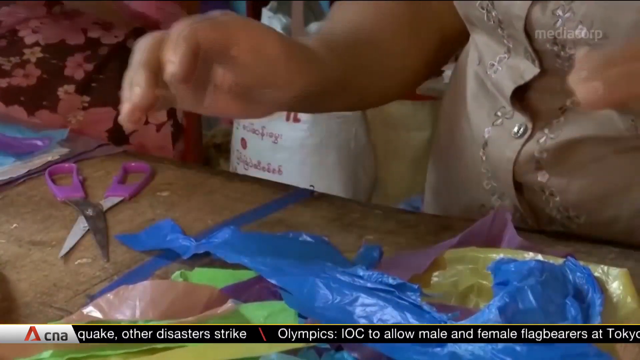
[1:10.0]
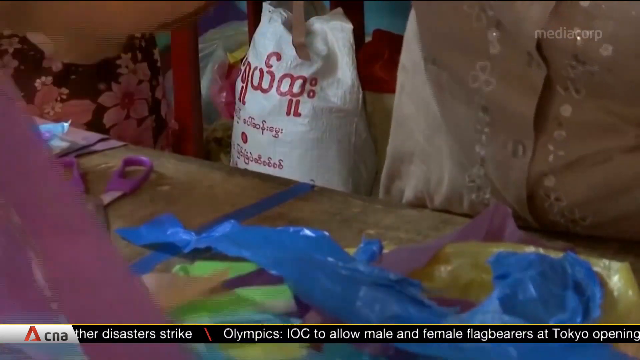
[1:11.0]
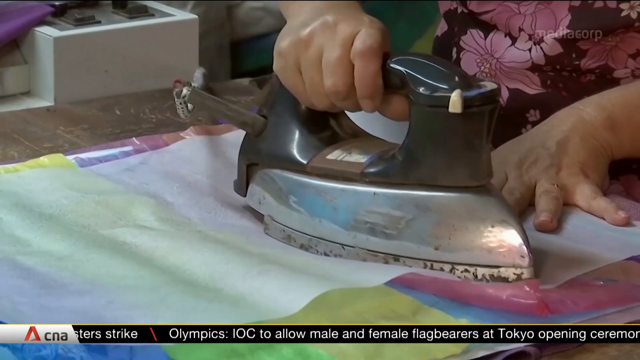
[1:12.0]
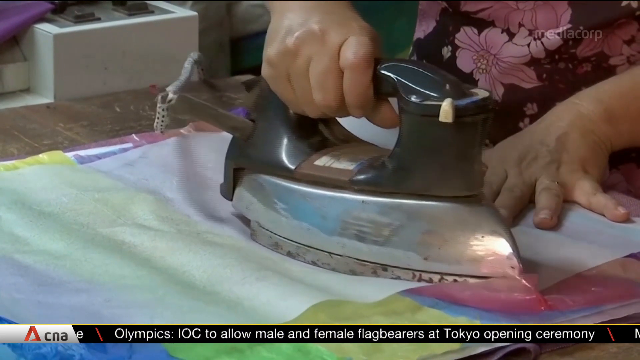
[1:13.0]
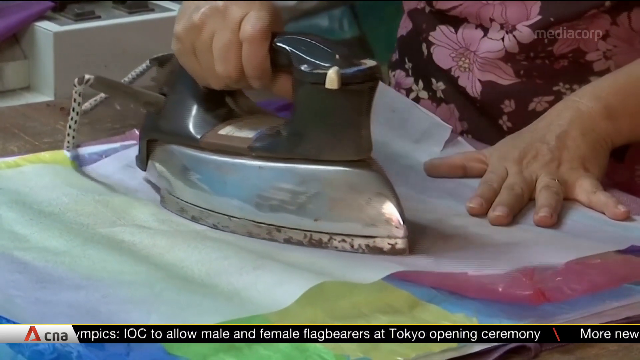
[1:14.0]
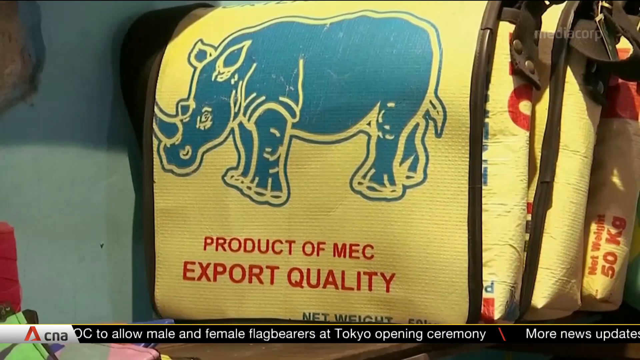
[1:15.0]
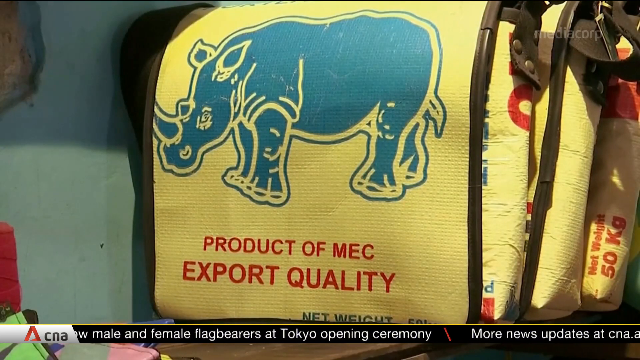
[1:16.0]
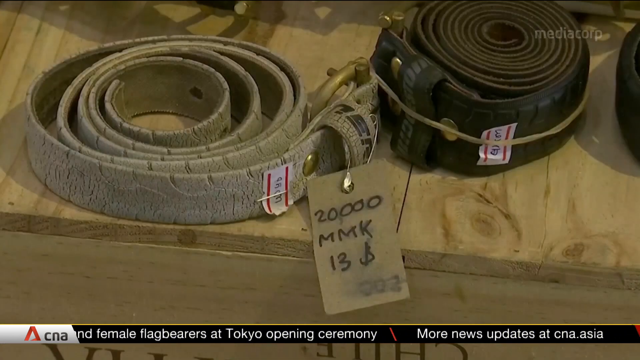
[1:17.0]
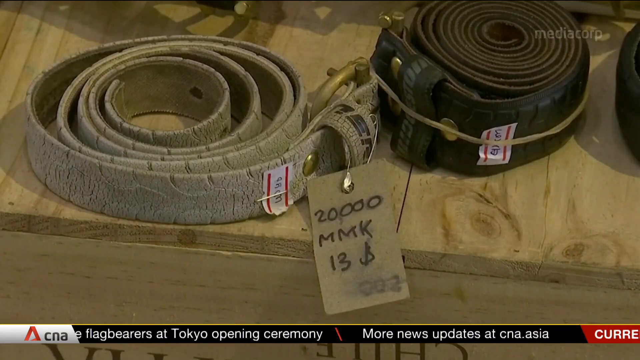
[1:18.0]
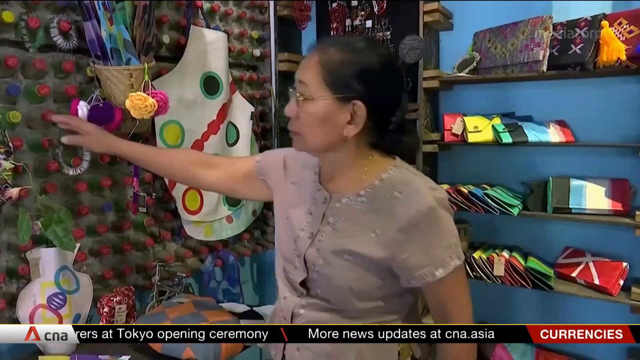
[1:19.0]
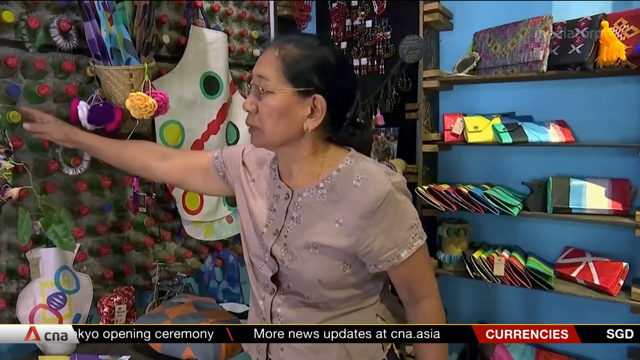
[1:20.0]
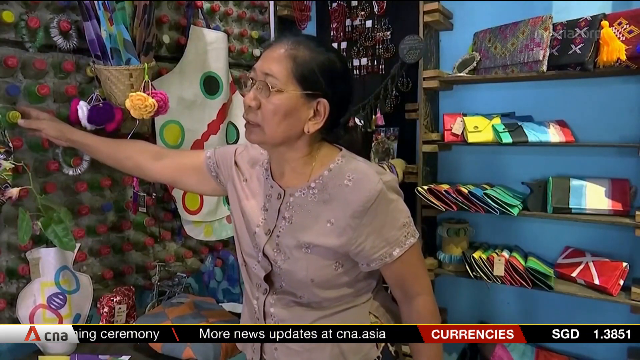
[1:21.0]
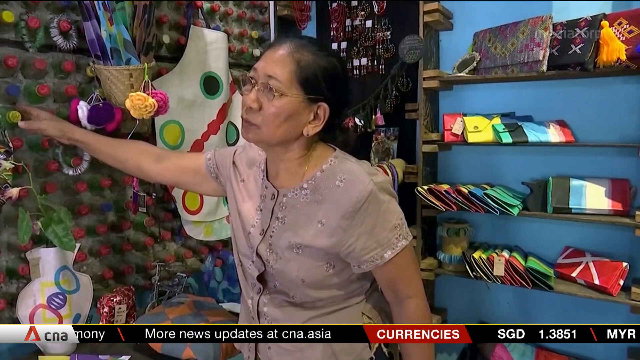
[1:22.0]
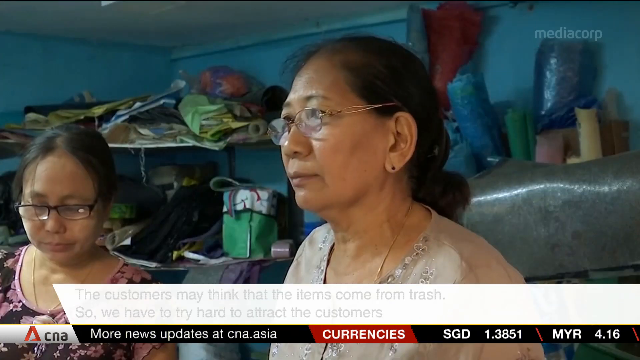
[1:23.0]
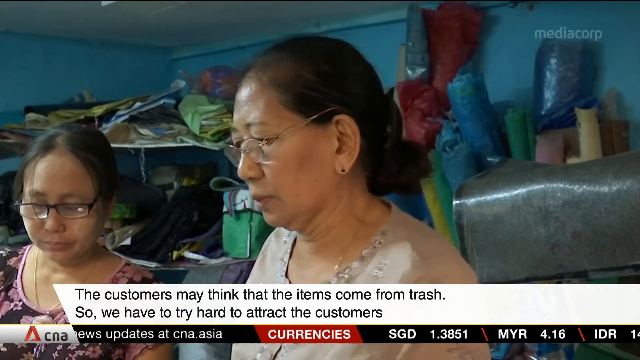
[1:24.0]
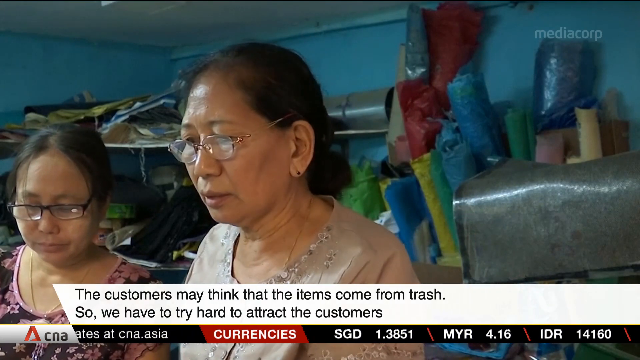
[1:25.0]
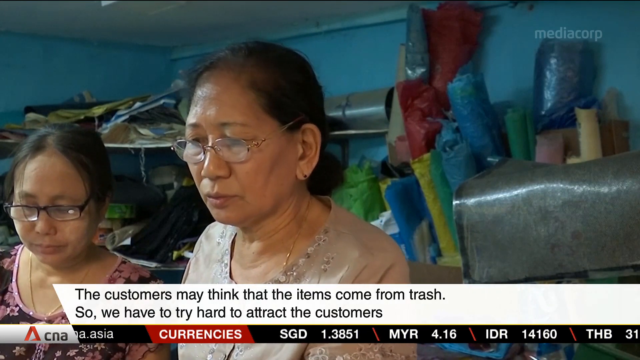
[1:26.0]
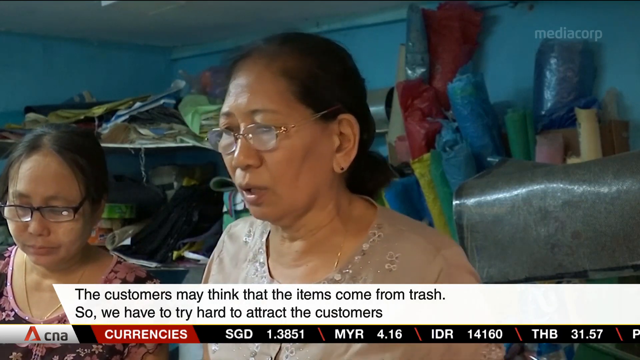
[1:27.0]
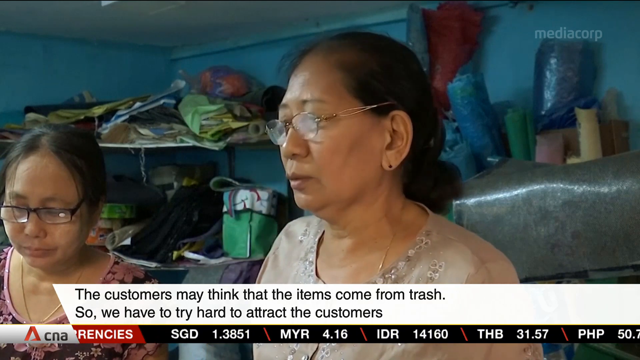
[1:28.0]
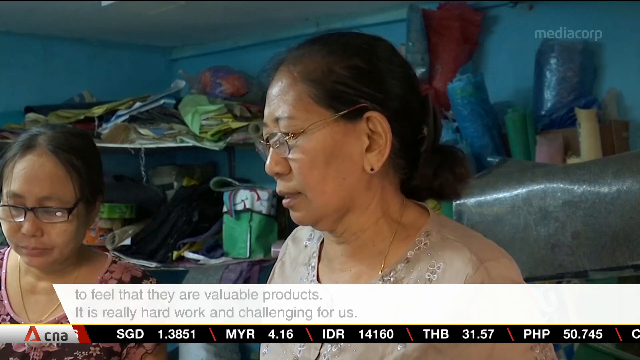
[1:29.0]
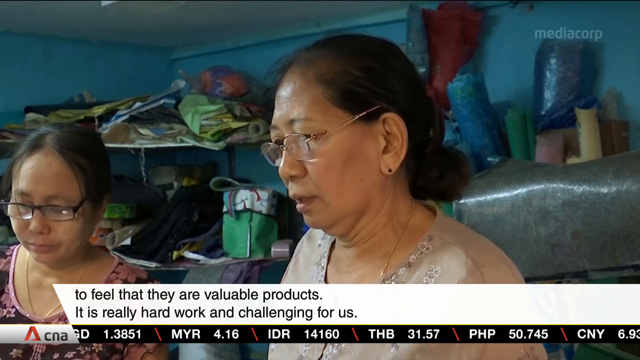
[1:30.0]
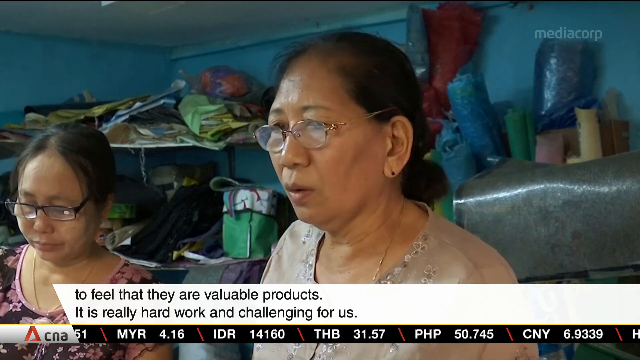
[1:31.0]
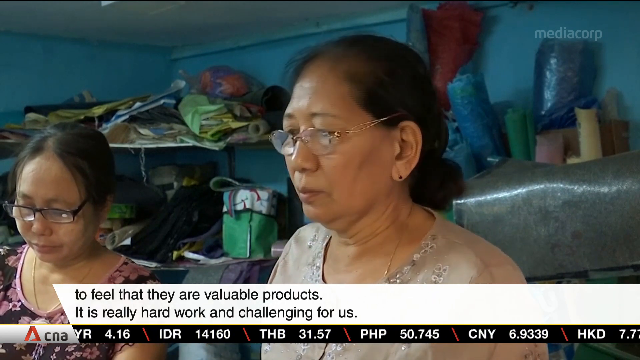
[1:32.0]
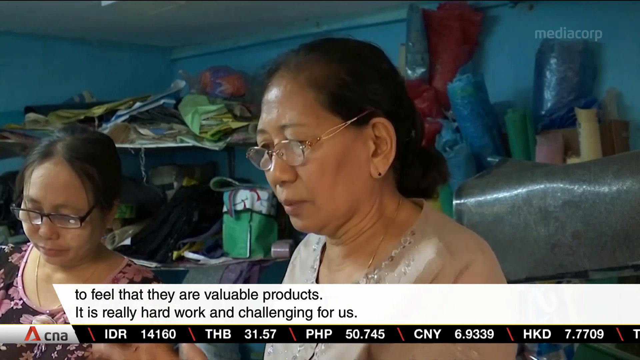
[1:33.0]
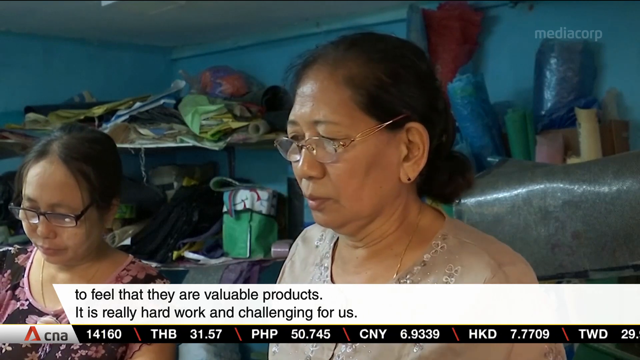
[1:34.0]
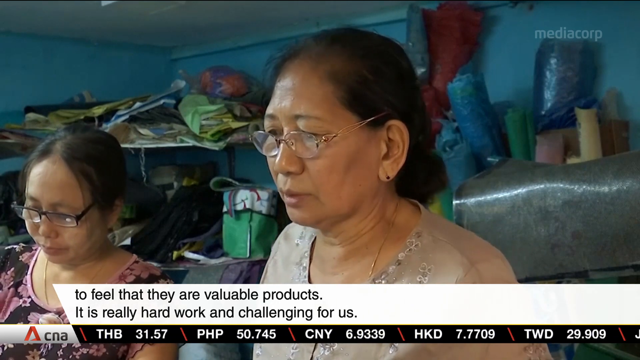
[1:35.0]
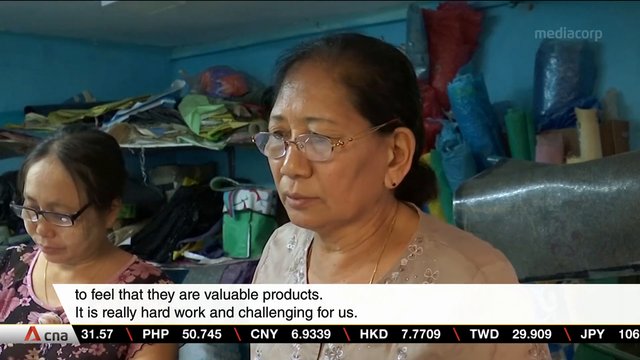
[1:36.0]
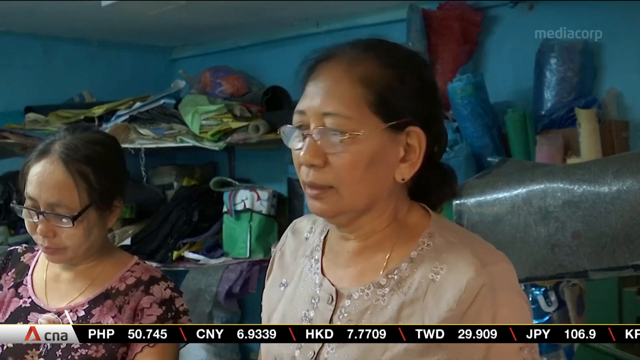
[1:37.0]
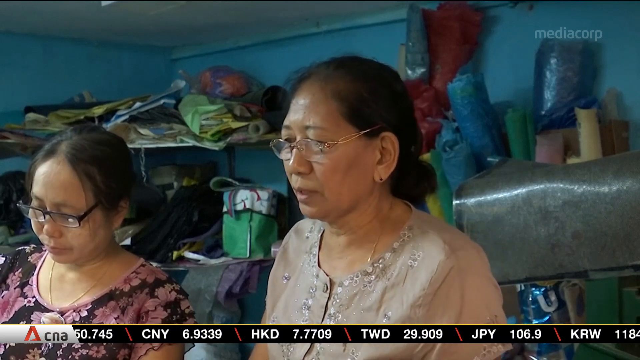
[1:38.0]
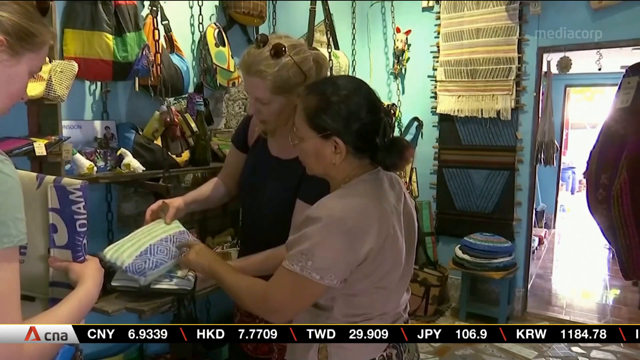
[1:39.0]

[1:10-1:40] The two ladies who were picking the rubbish appear. A pair of scissors is on top of a table, along with lots of plastic in different colors. One lady wears a grey or goldish top. They appear to be doing recycling, using a presser to press the plastic or material flat and straight. The scene then moves to a shop, where a lady shows different things in the shop. On-screen text reads "to see that they are valuable products is really hard work".